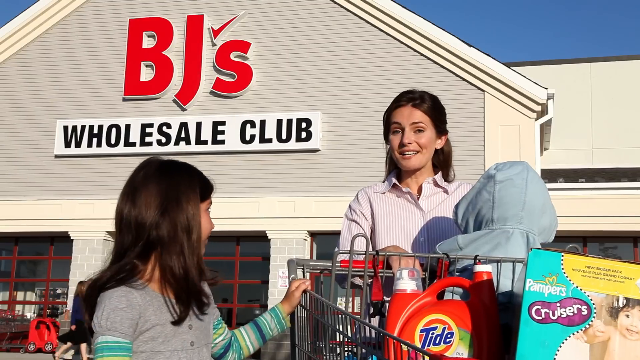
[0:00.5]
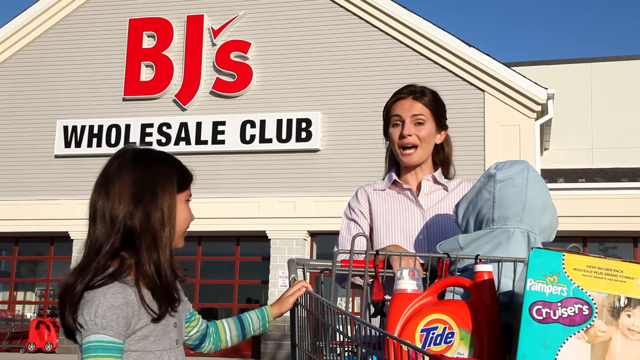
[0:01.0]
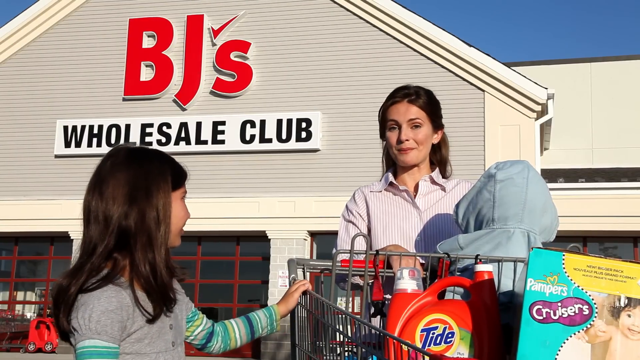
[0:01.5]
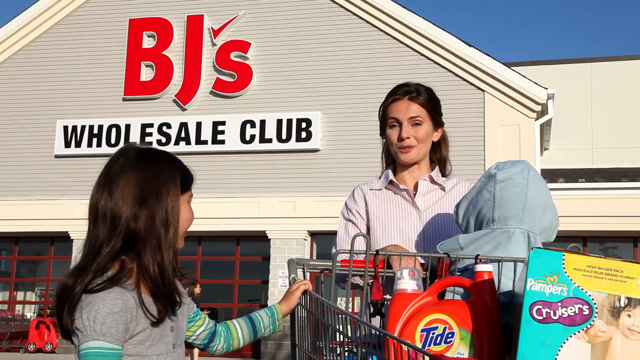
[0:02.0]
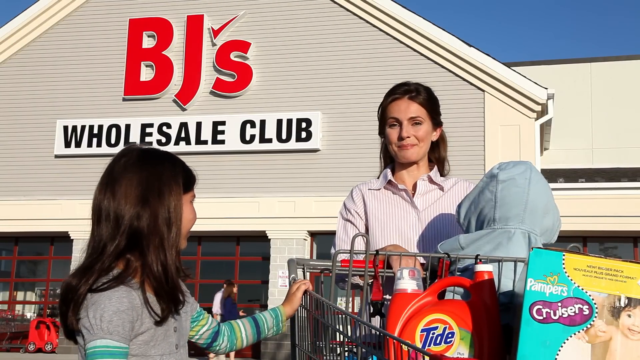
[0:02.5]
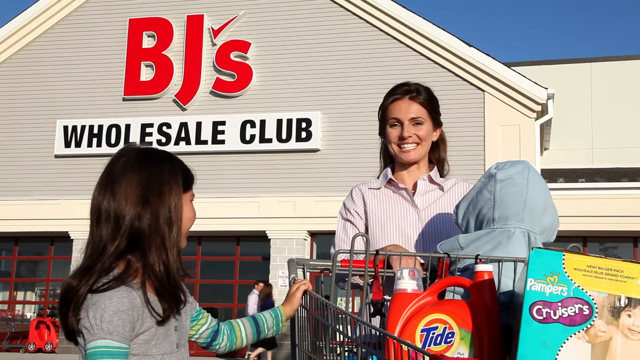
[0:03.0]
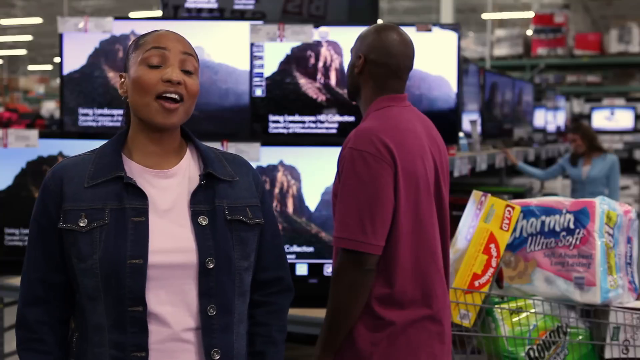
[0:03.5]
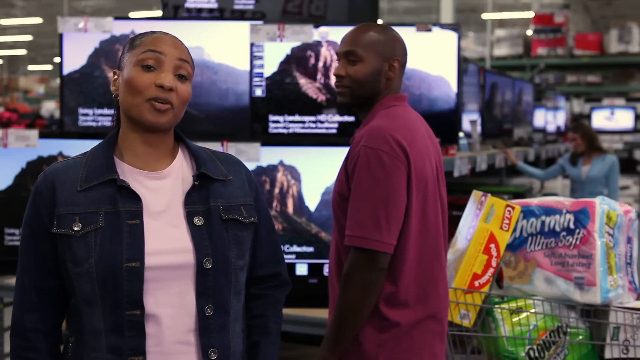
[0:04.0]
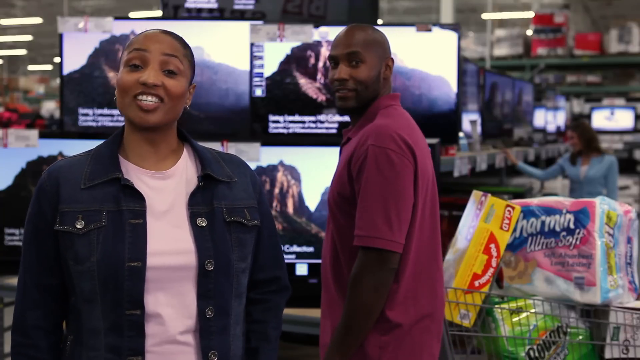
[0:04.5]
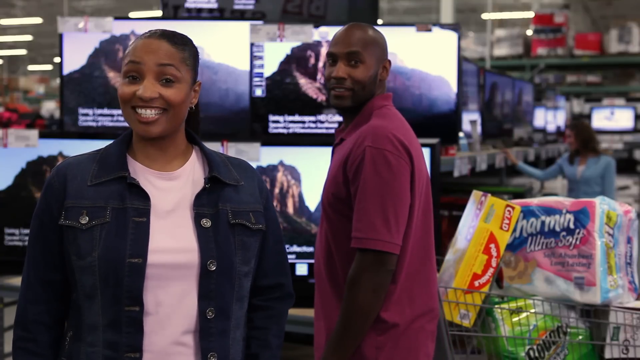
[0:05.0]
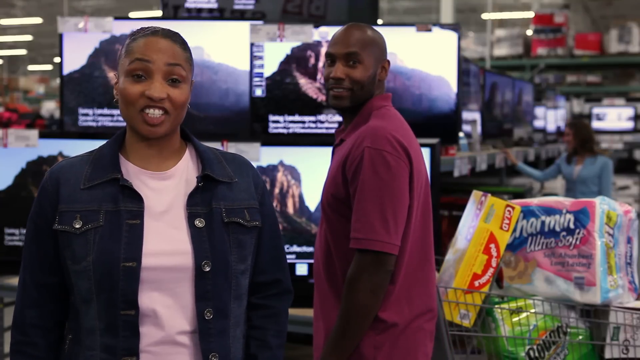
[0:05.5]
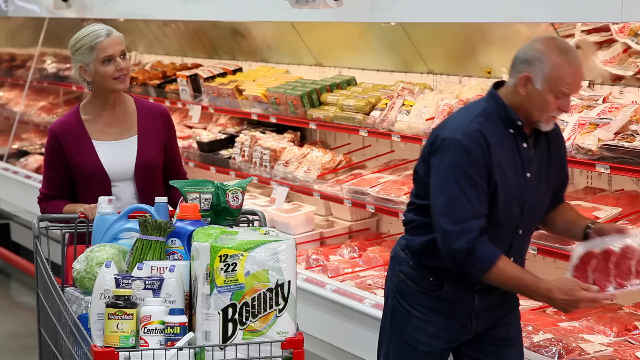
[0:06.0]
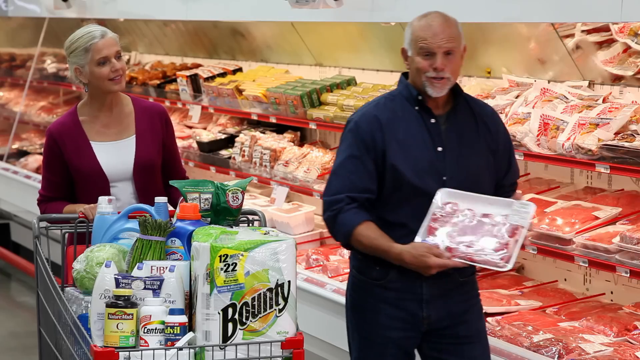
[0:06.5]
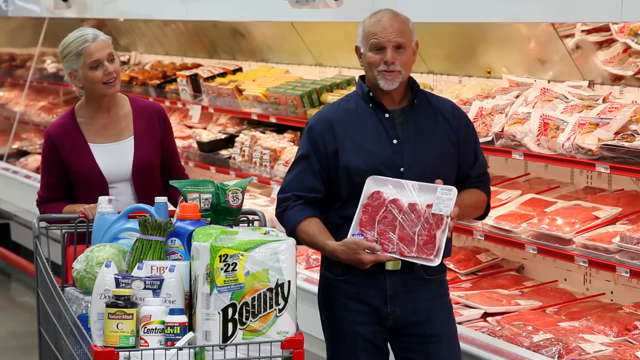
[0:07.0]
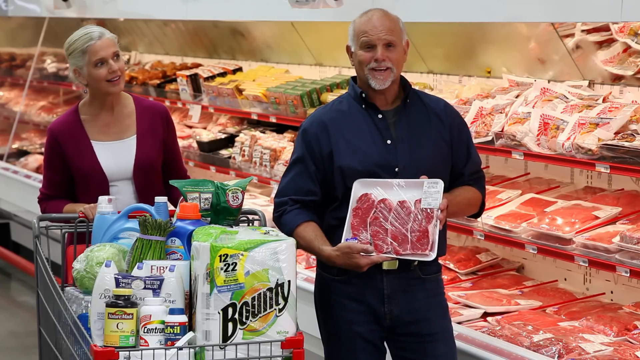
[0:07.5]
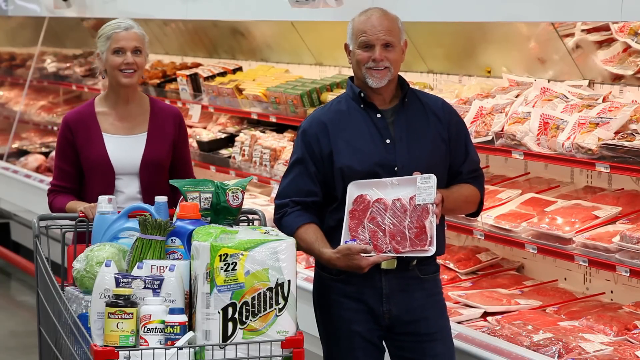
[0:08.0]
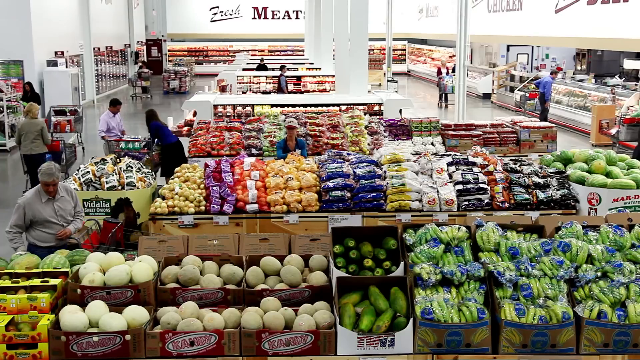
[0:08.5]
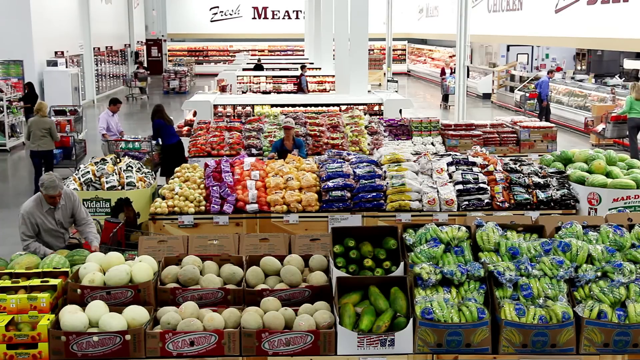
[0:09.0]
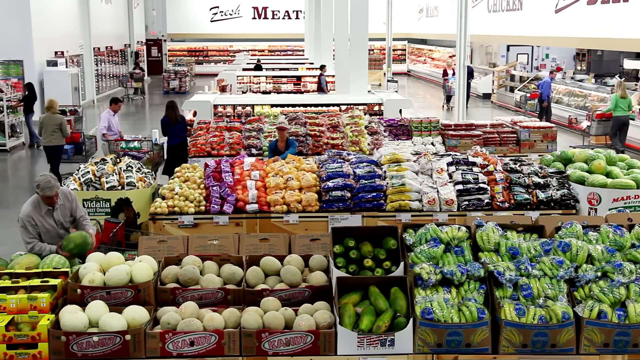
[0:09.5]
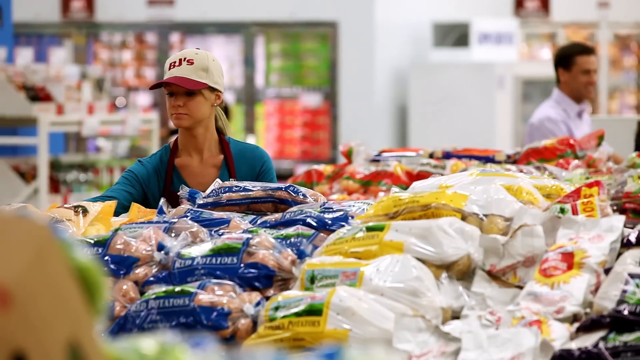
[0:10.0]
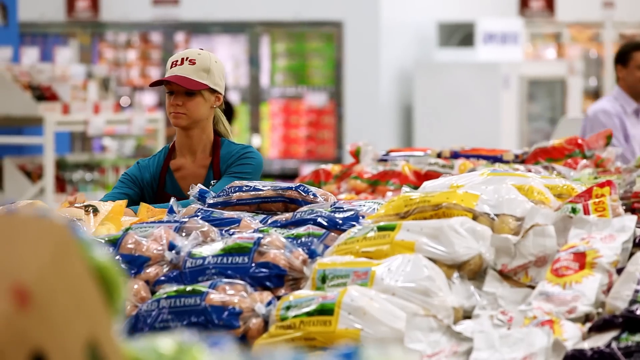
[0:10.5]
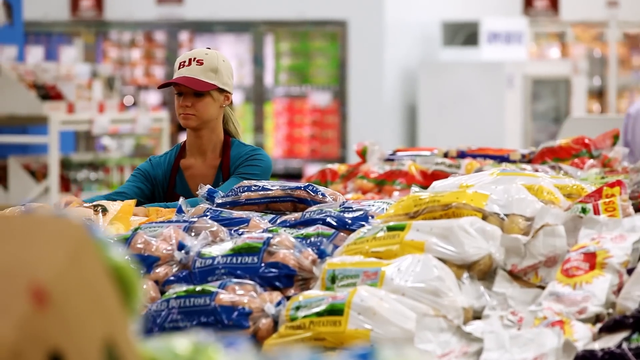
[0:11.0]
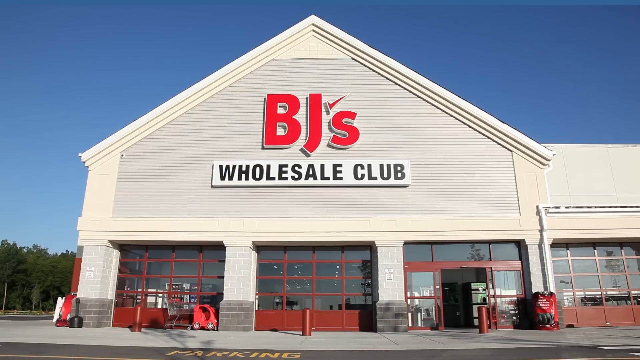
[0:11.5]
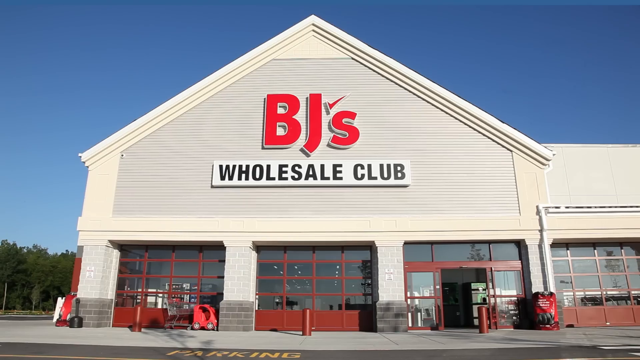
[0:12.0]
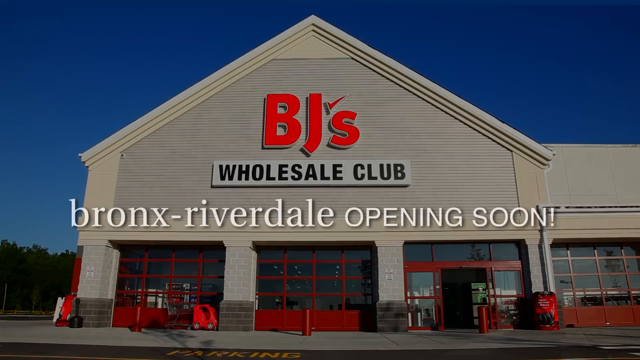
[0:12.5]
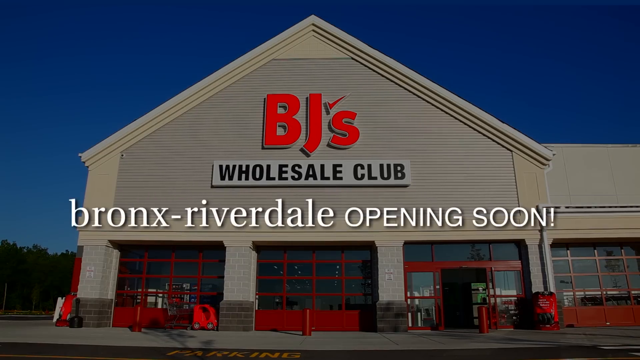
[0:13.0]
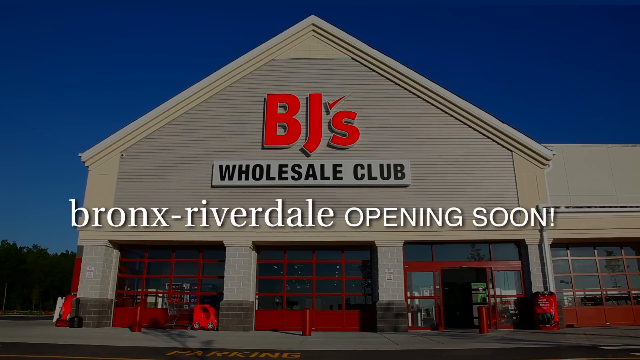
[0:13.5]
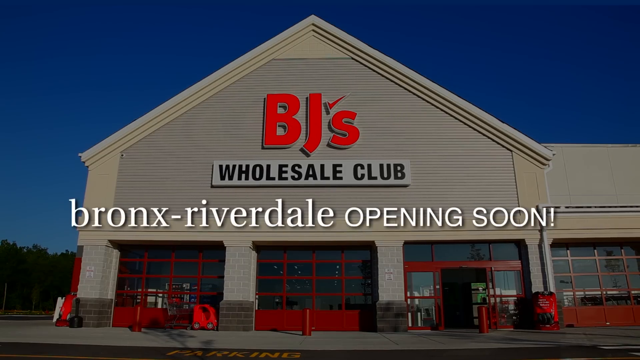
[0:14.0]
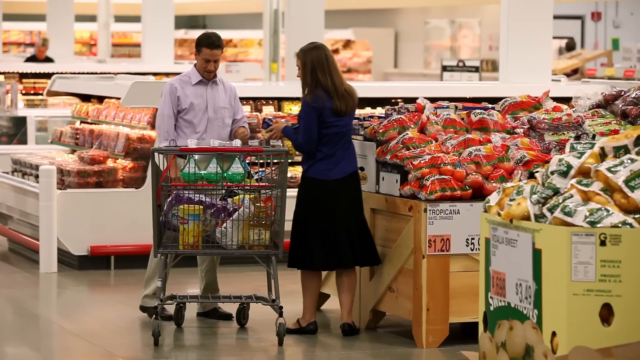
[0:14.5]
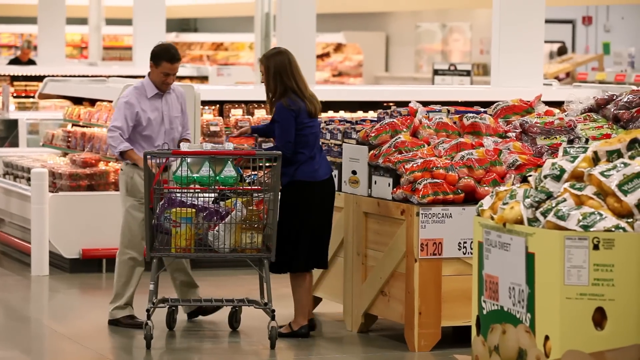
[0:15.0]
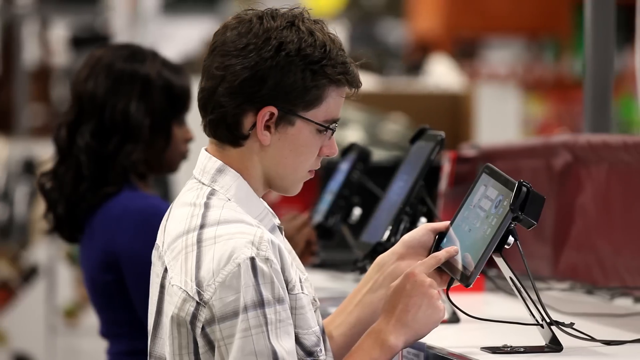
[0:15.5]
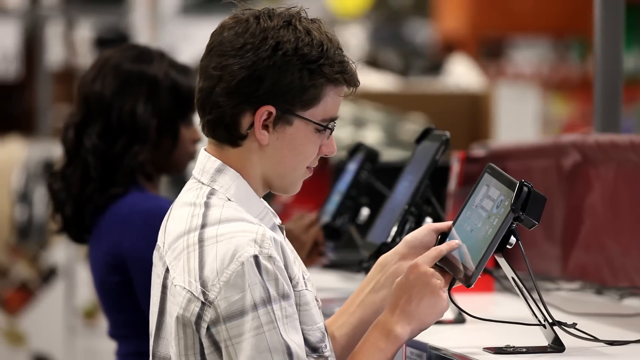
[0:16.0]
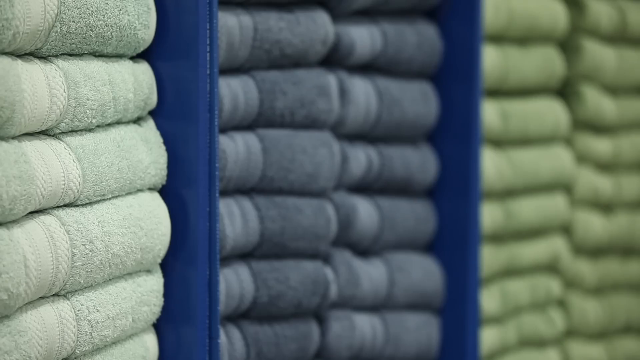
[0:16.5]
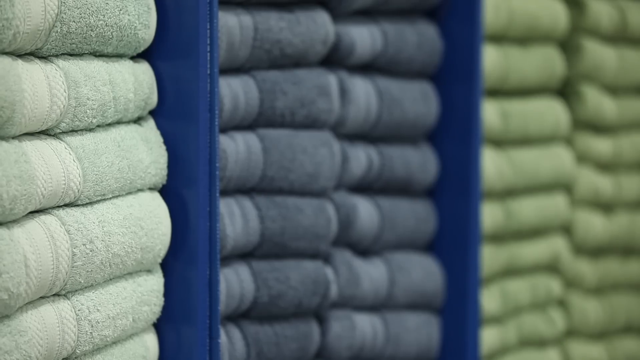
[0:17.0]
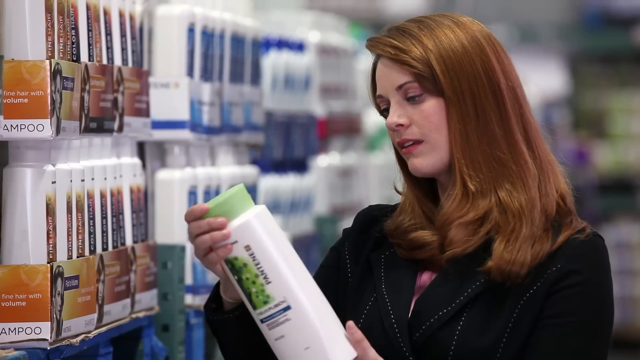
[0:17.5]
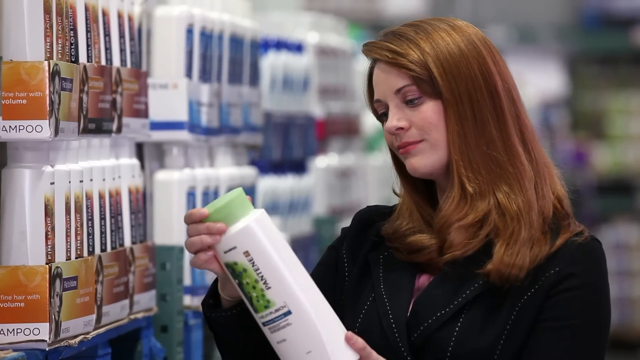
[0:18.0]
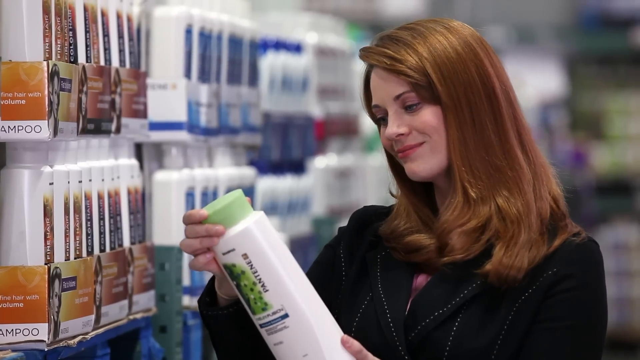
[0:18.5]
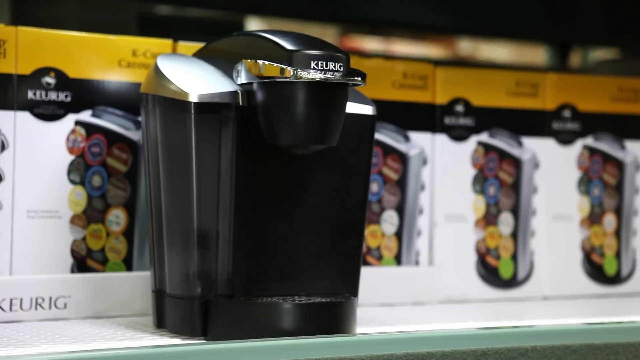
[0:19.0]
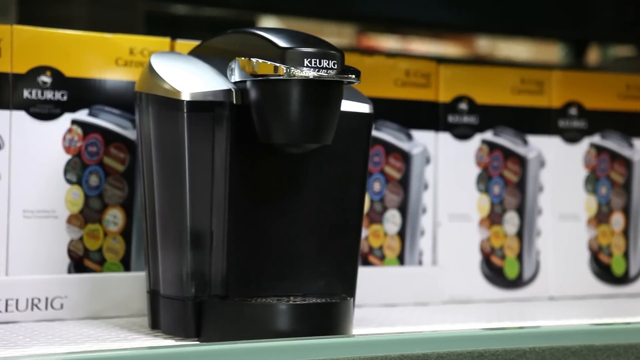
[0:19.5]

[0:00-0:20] The front of a shop called BJ's Wholesale Club appears. The building is mostly white, with "BJ's" in red and some red details on the building. In the foreground a woman talks to the camera with a cart in front of her filled with her purchased items. A baby is sat in the cart with their back turned to the camera, and beside the cart a younger girl has her hand on the cart and is looking at her mother. Next comes a shot of another girl inside the shop. Behind her is the aisle dedicated to TV screens, all turned on and showing the same rocky landscape. The lady is standing on the left of the screen, talking to the camera. Beside her, a man who is first turned away from the camera turns to look at it, and beside him is a cart filled with items. A couple then appears in the aisle dedicated to meat: on the left a lady with a cart full of items, and beside her a man holding some packaged meat in his hands, talking to the camera. A very wide shot of the supermarket follows, showing the area dedicated to fruits and vegetables and people moving through the corridors. Then the supermarket is shown from outside, with no people. The image darkens a little and the text "Bronx-Riverdale opening soon" appears on screen. Some very quick shots follow: first a couple shopping through an aisle of the supermarket, then a young man trying a tablet in the area dedicated to technology, then a close-up of some towels neatly organized by colors, and a lady with ginger hair checking a shampoo bottle.